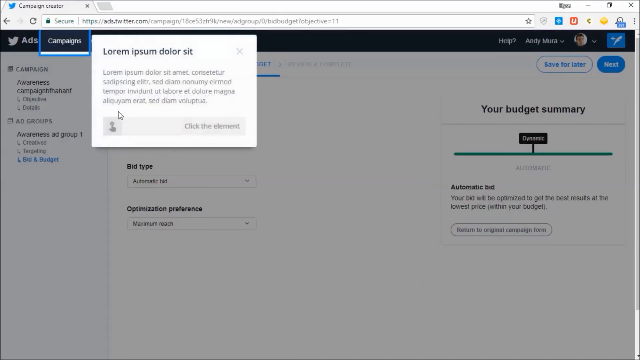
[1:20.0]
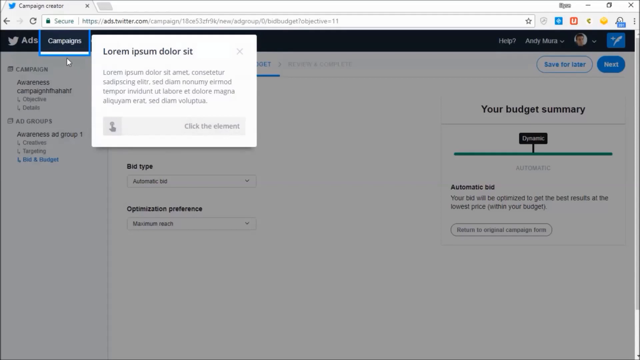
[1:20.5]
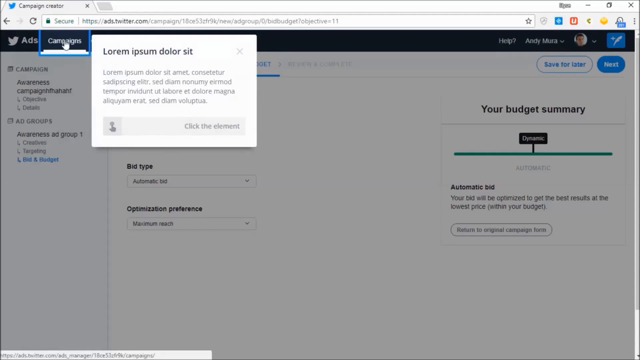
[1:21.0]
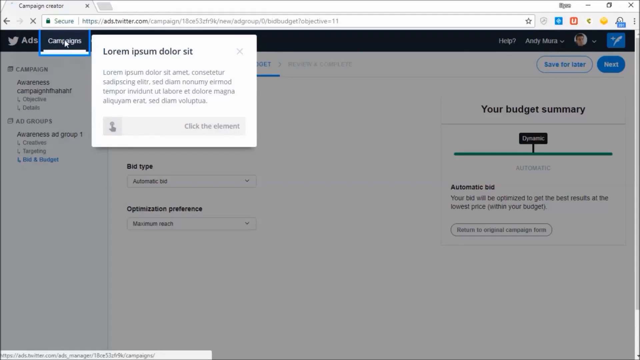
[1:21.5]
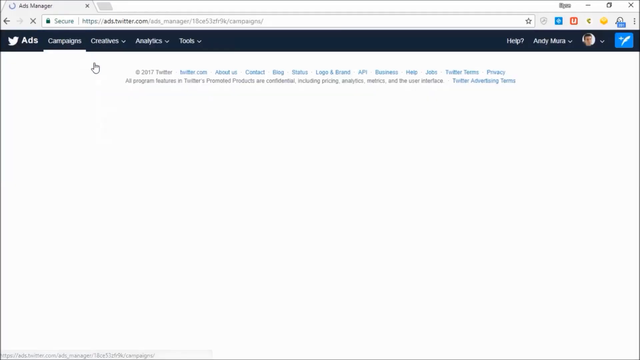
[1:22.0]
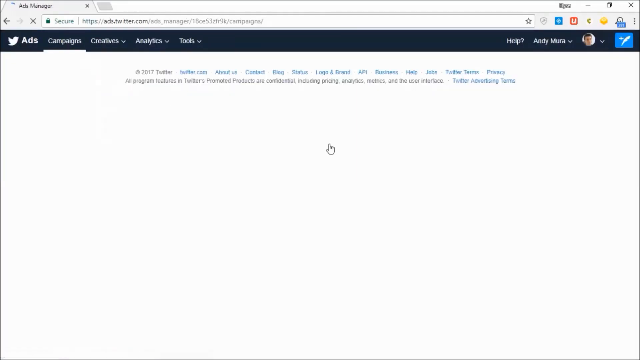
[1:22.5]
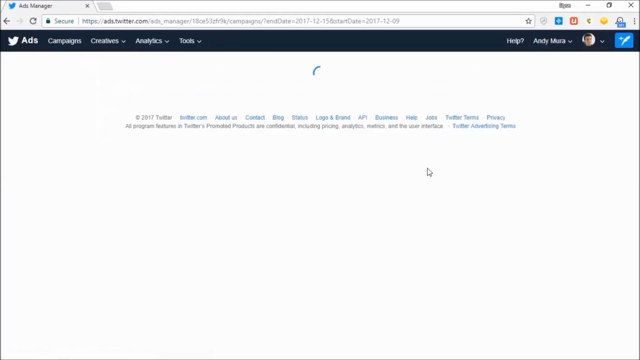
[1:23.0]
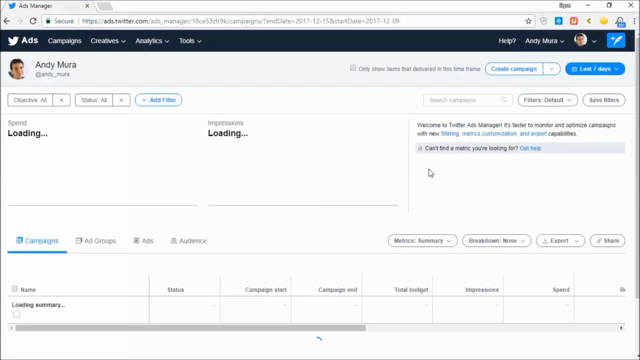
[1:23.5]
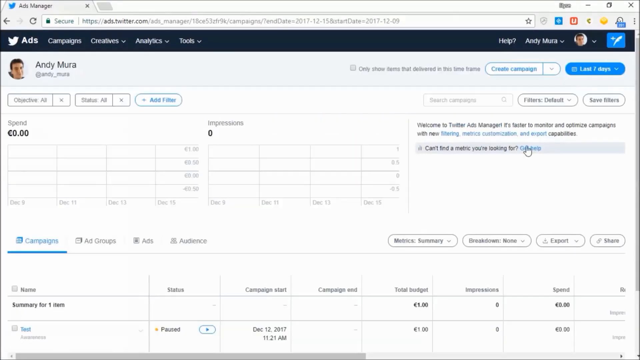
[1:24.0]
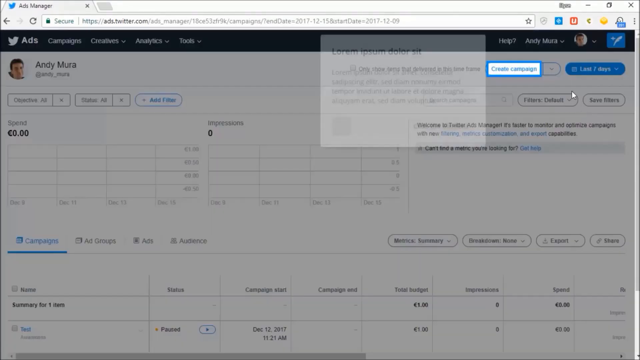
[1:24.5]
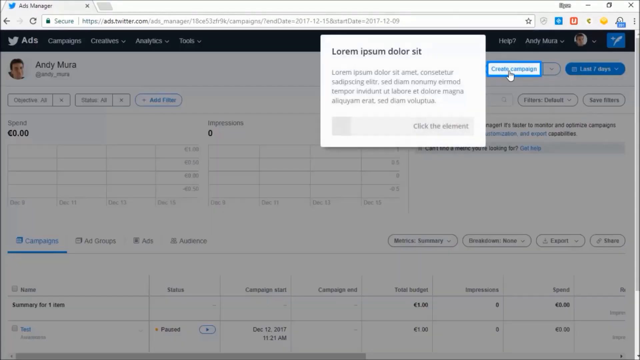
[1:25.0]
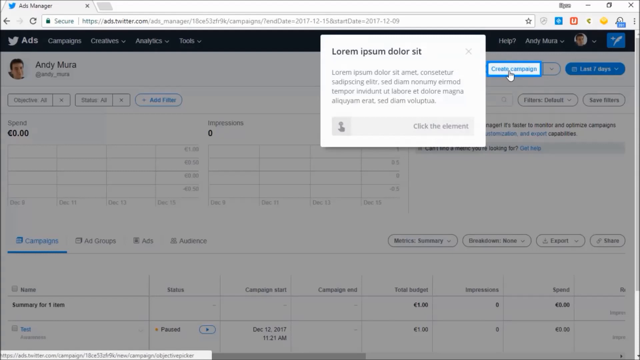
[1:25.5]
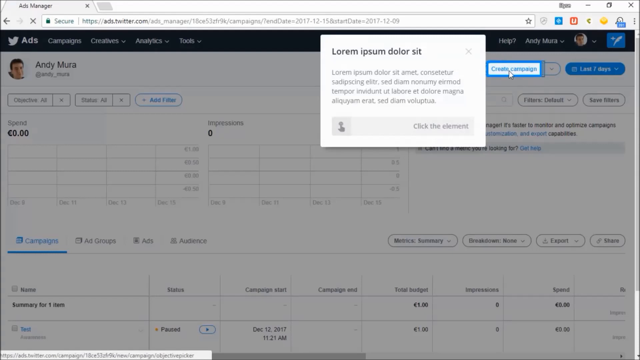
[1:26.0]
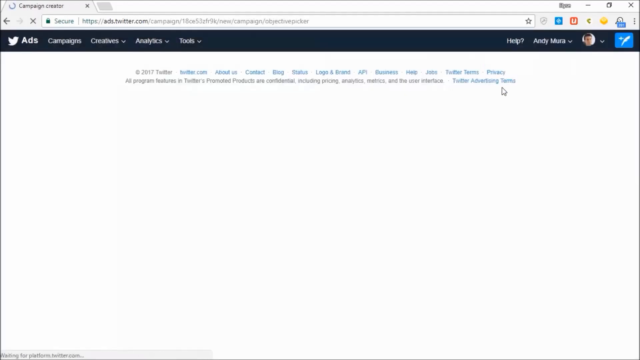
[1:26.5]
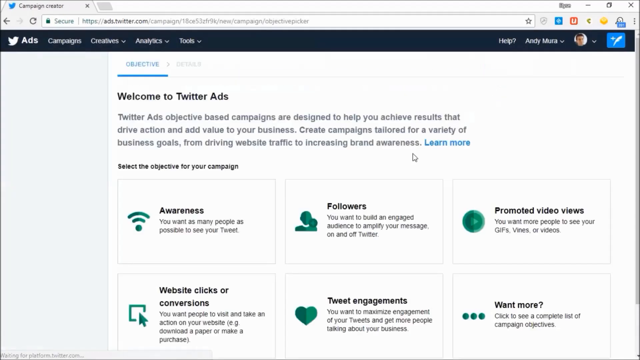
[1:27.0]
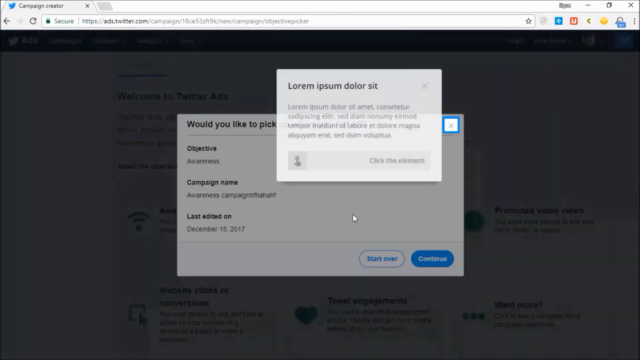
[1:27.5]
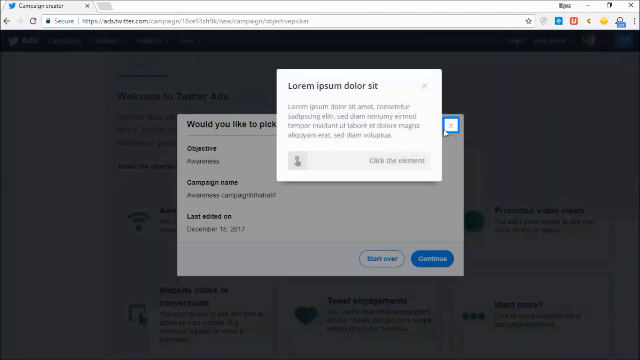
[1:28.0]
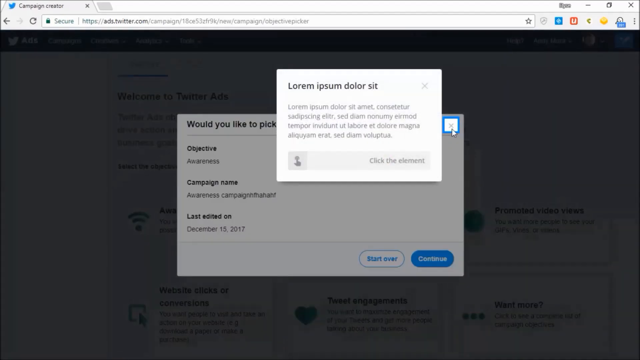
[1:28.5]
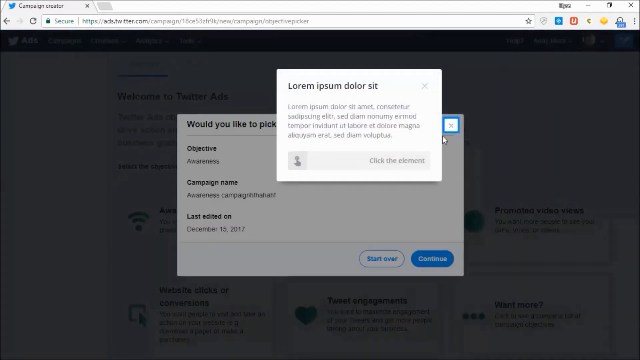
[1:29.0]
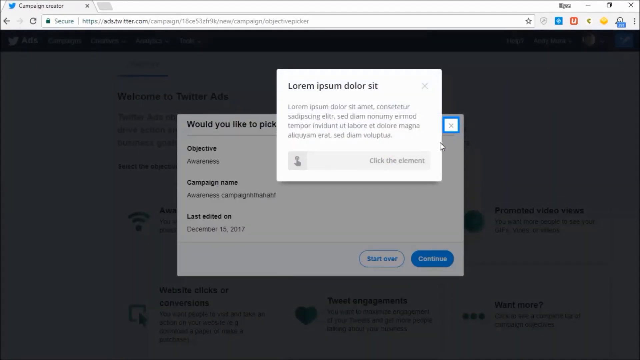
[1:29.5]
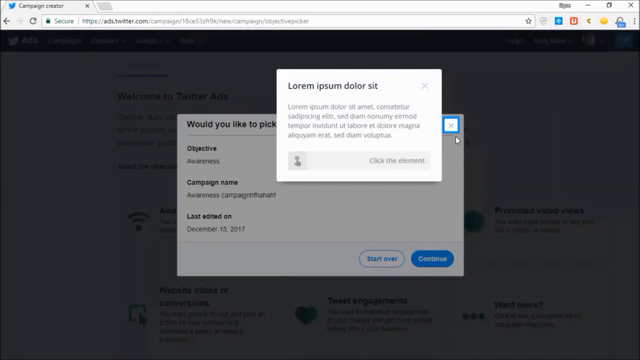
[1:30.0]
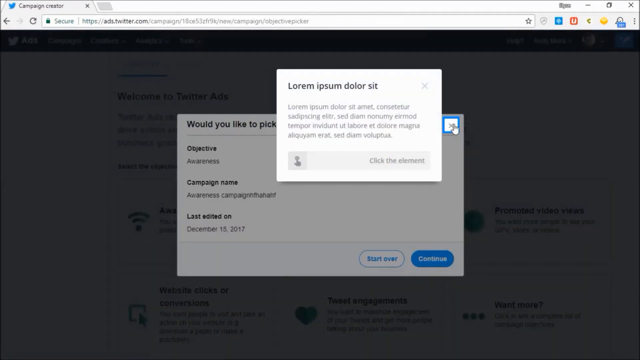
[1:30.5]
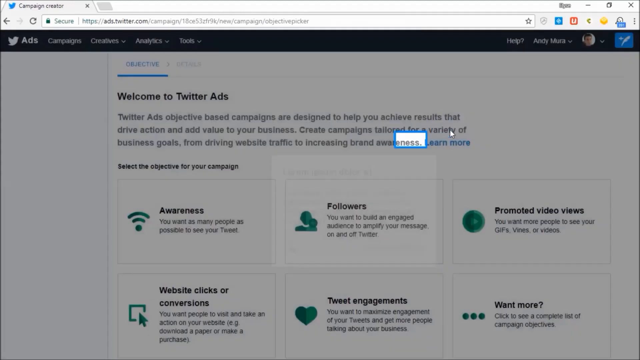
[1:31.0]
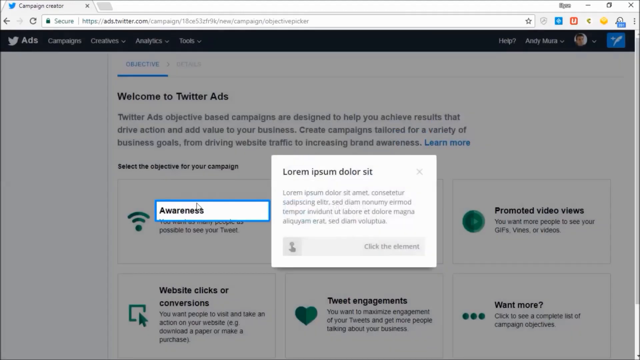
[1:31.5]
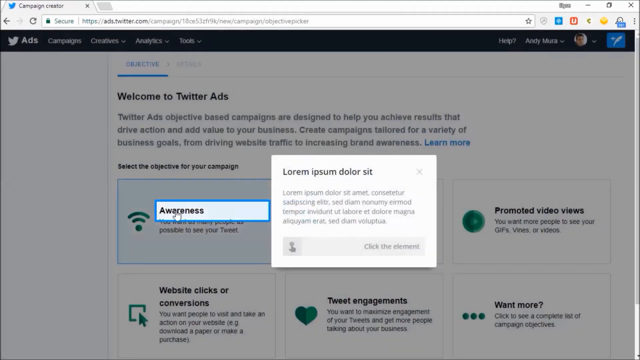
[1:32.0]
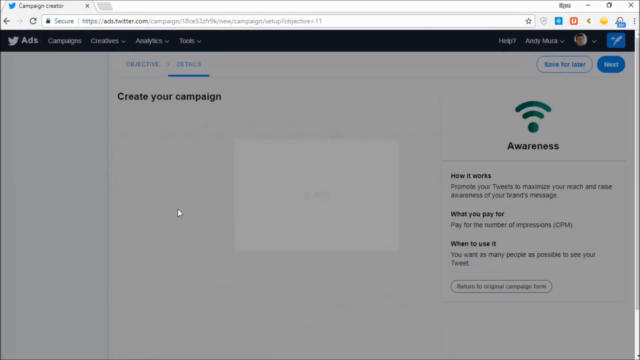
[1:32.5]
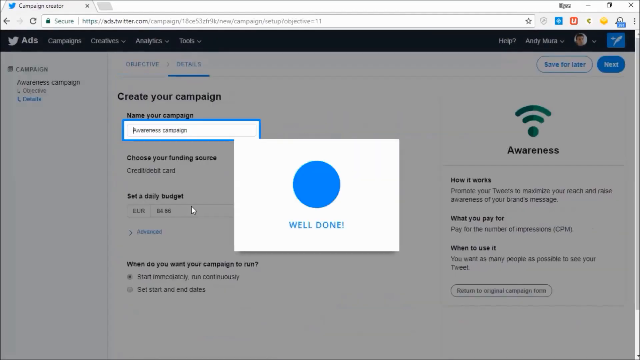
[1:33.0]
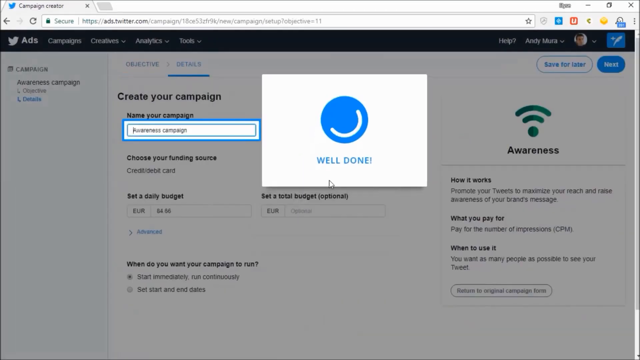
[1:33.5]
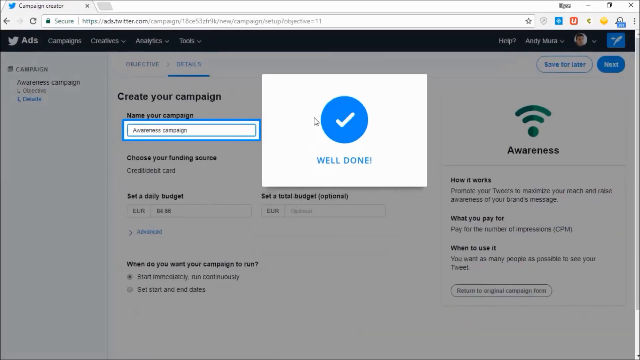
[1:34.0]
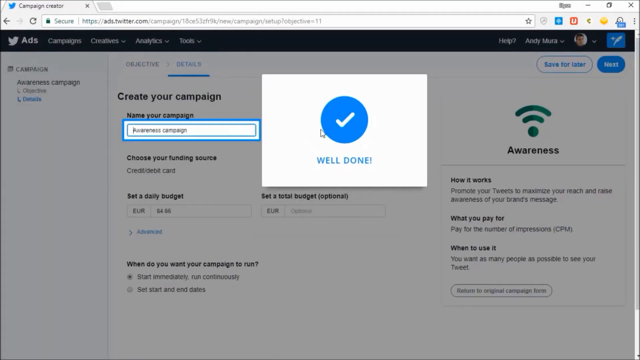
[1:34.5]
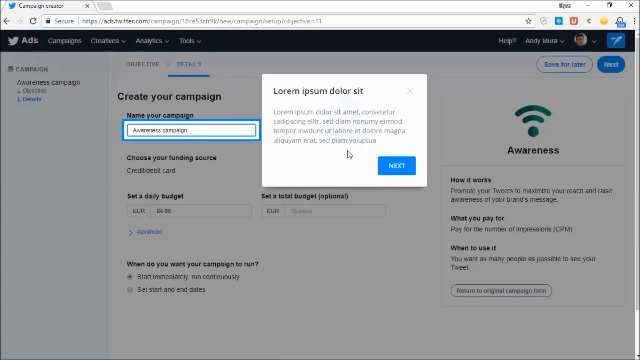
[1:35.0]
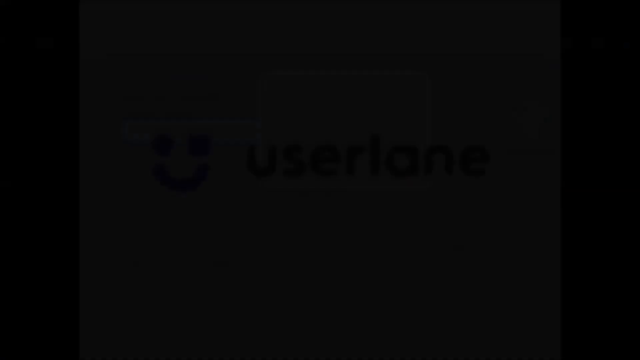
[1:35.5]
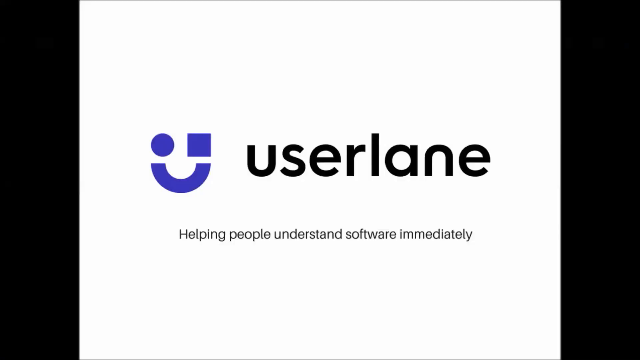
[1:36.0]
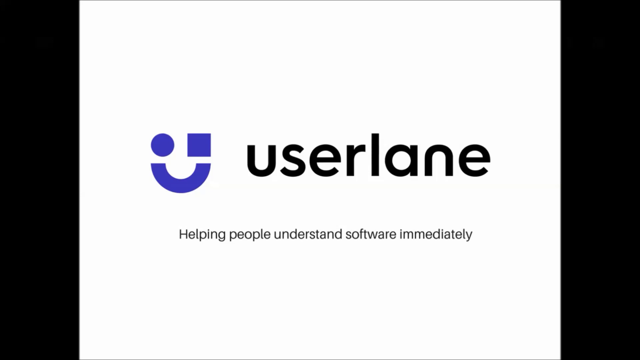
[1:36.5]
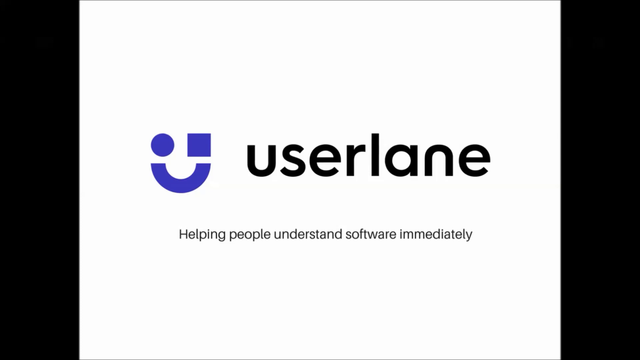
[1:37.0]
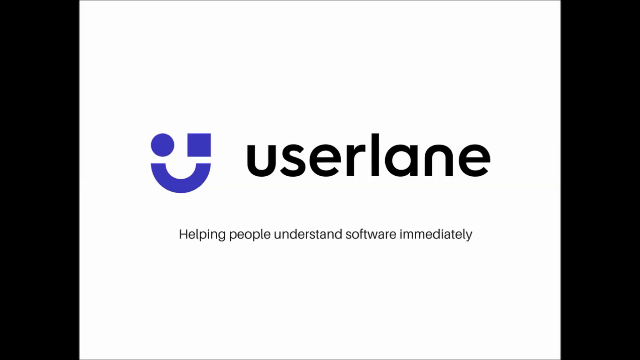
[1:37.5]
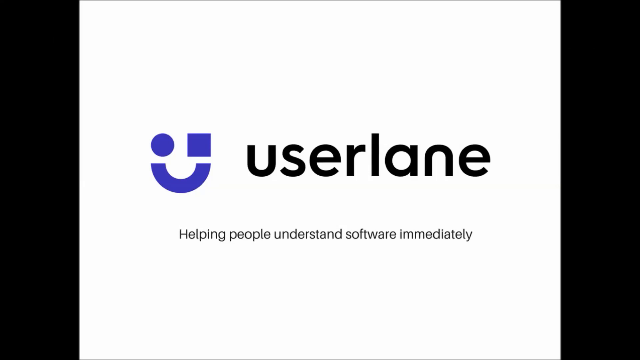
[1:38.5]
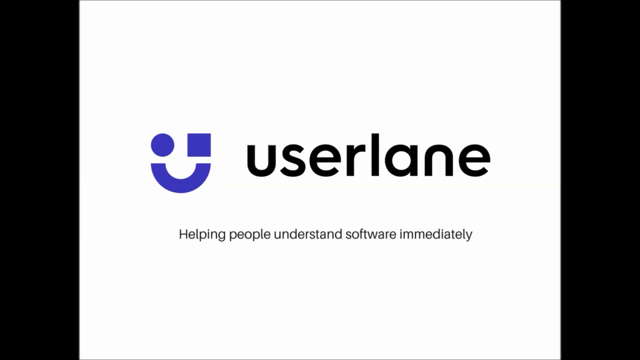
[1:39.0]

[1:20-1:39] A campaigns page on the Twitter UI for Andy Mora is shown, with the campaigns area highlighted in the upper left-hand corner next to "ads". Next to "ads" is the Twitter bird. A box is open that seems to be a demo box, apparently in Latin, just an example, and it is highlighted. The user clicks on campaigns and is brought to another page that says "create campaigns"; clicking it brings up the same demo-looking box, which has a click area with what looks like a search bar for entering information. The user clicks off of that and clicks on "awareness", and it says "well done" with a blue circle with a check in the middle, which the user circles with the mouse pointer. At the bottom it says "user lane" and "helping people understand software", with an icon next to "user lane".